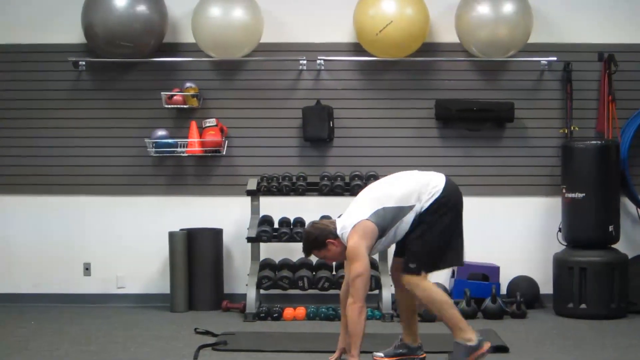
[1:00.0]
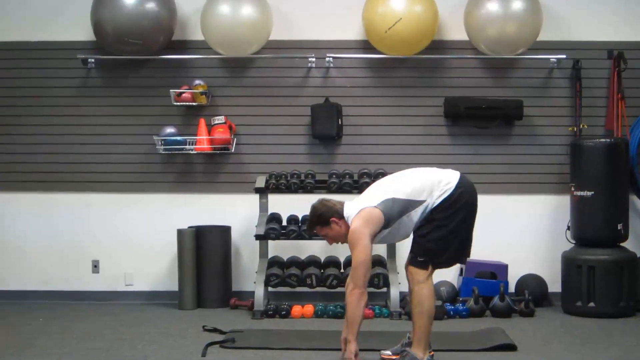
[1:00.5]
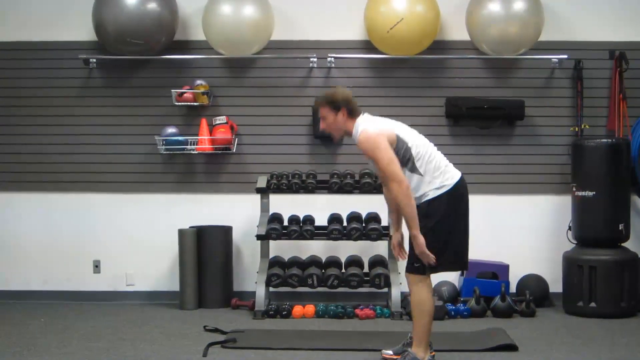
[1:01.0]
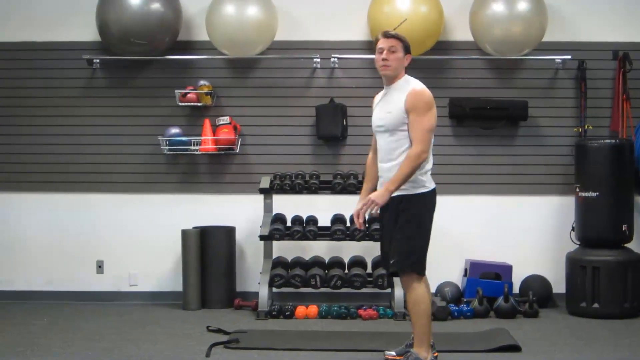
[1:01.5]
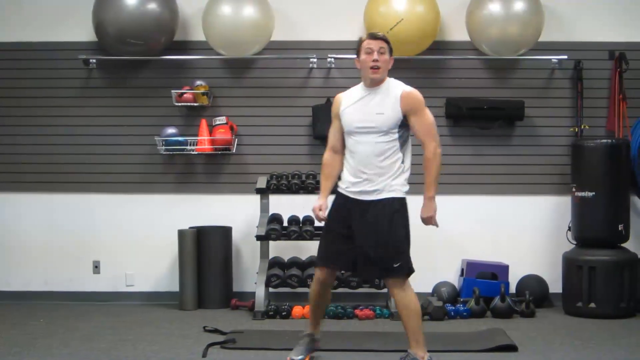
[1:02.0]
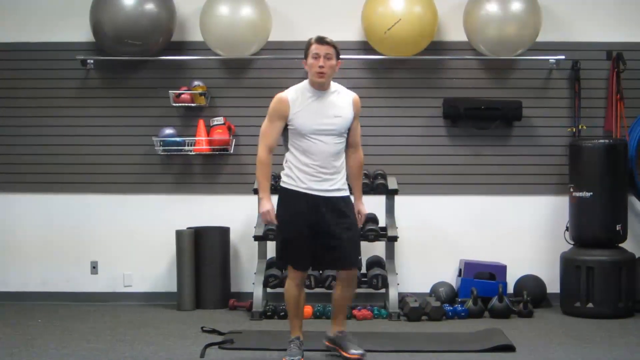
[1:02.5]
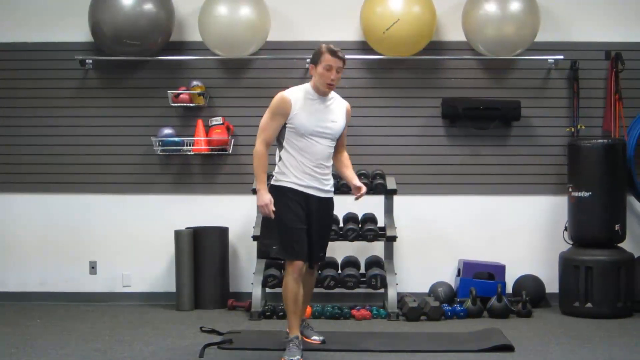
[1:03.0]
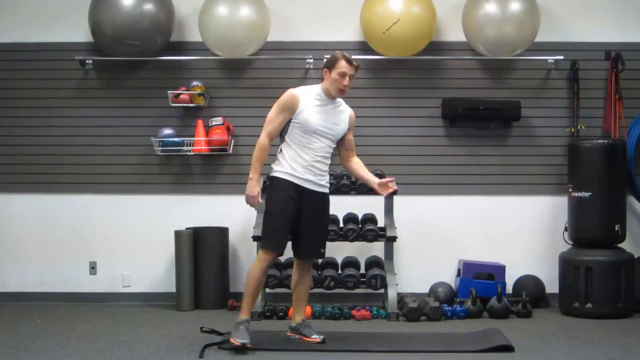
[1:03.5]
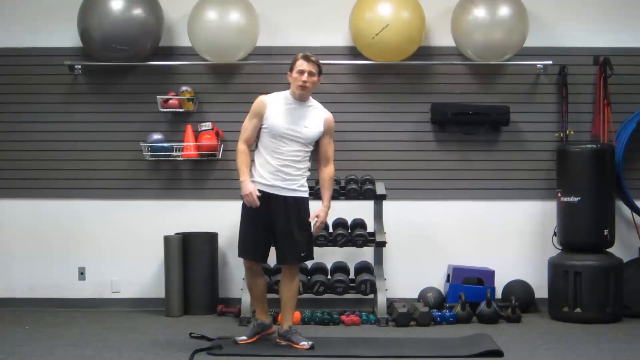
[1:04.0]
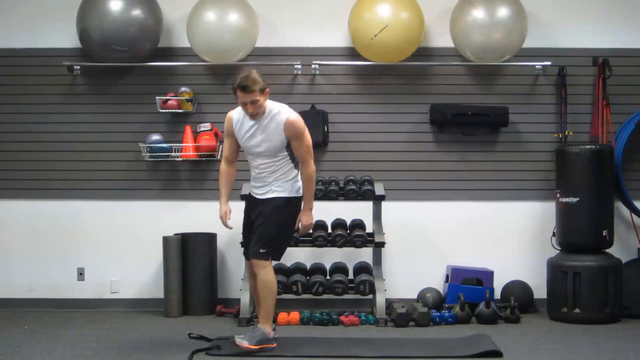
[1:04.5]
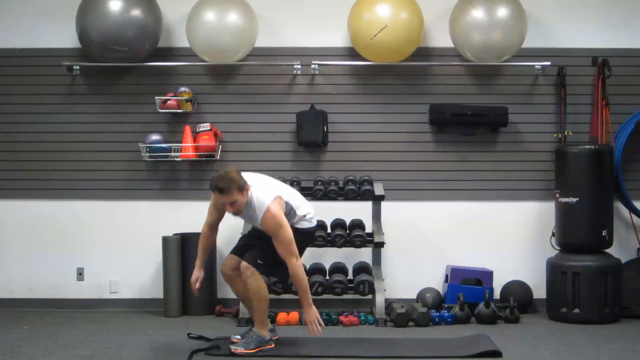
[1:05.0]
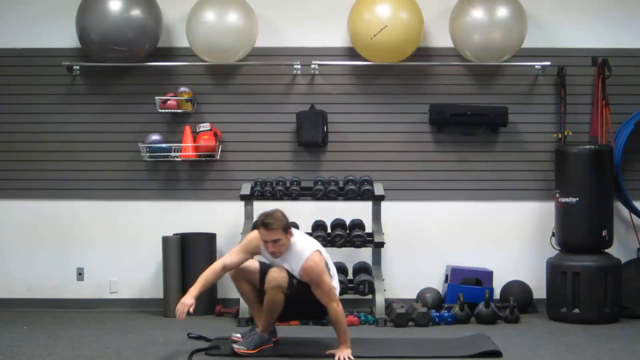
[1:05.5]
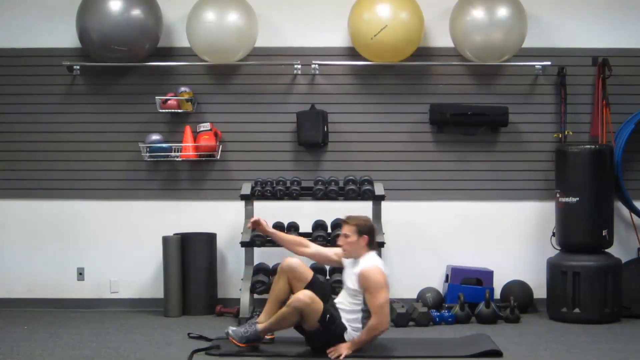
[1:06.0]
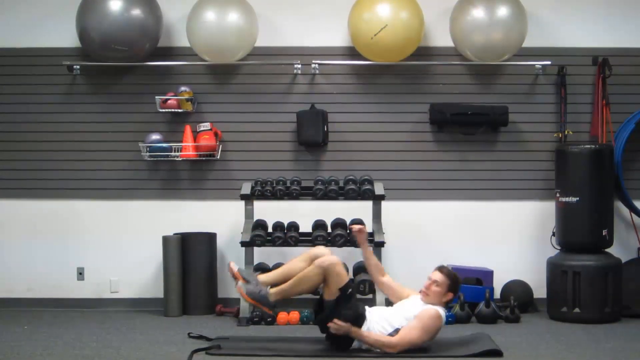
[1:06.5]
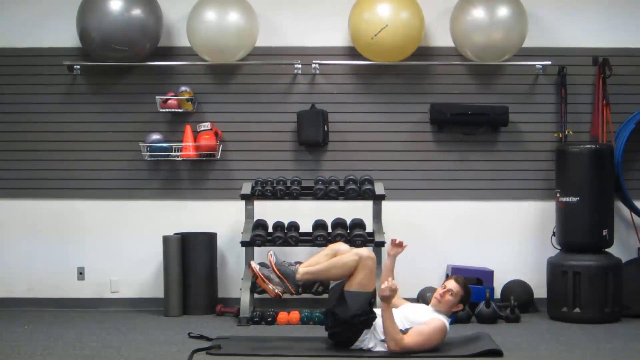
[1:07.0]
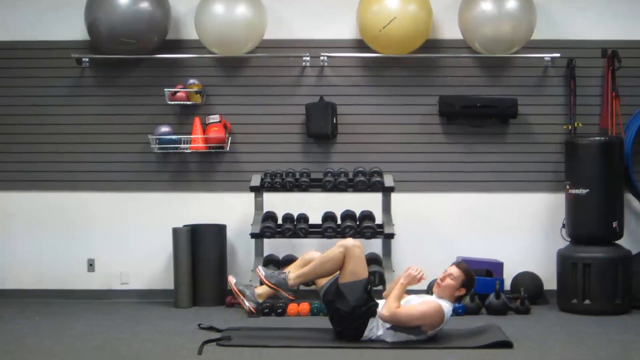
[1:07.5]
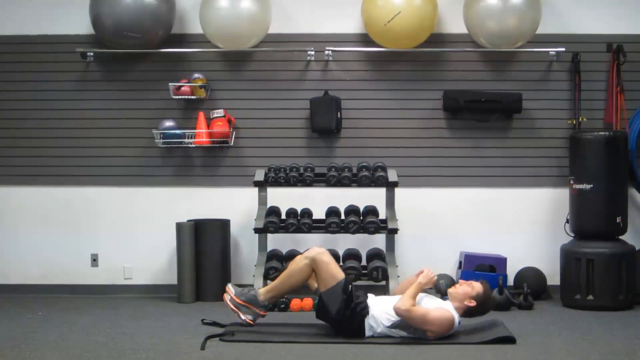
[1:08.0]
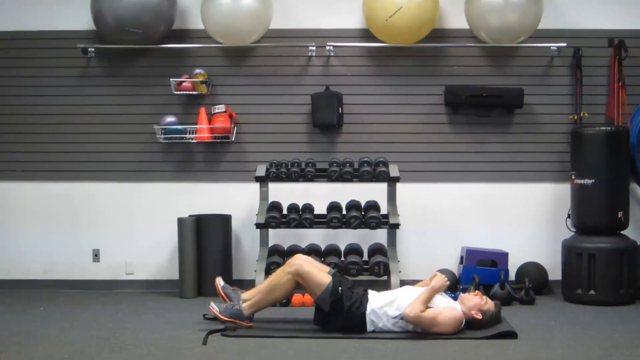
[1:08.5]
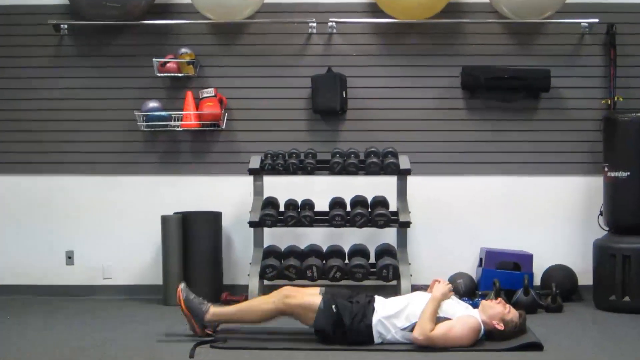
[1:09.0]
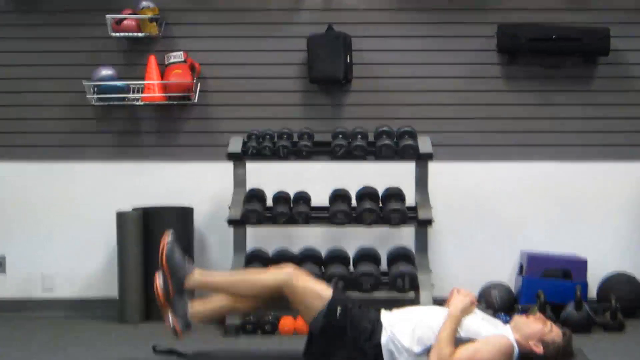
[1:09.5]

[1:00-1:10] The man seems to be bending over with his arms straight and his legs slightly bent as he walks toward the left side of the screen. Midway he stands up straight, moves his body vertically and to the side, and points at the ground. He then moves into another workout position: he leans back, puts his left hand on the ground and his butt on the ground as well, and leans back until his legs are in the air. He seems to put his body and head straight, lies flat on the ground and raises both legs up toward his body.